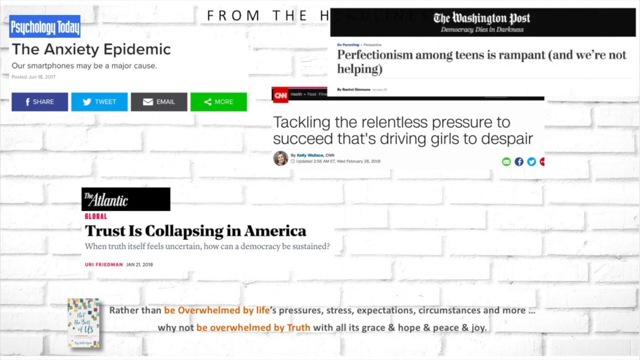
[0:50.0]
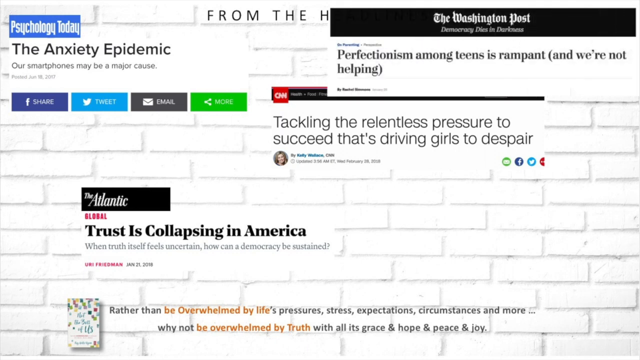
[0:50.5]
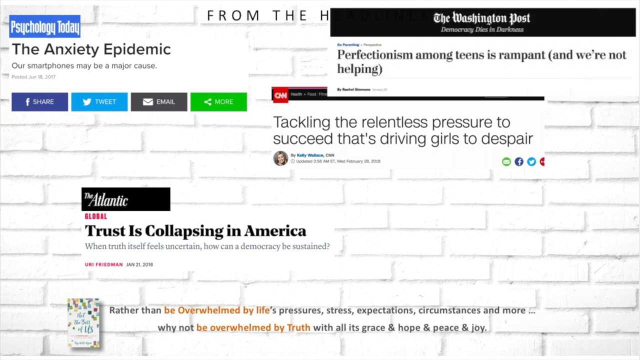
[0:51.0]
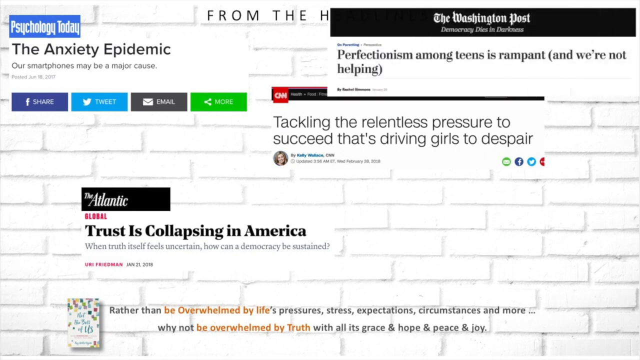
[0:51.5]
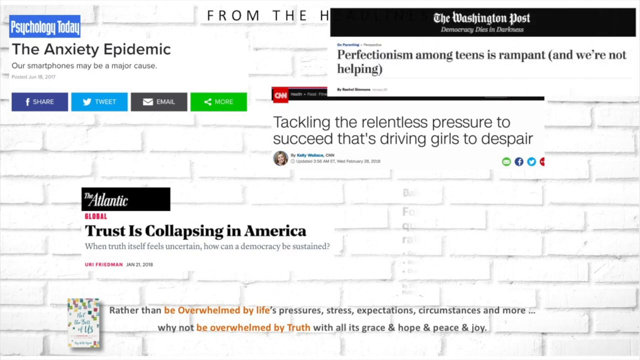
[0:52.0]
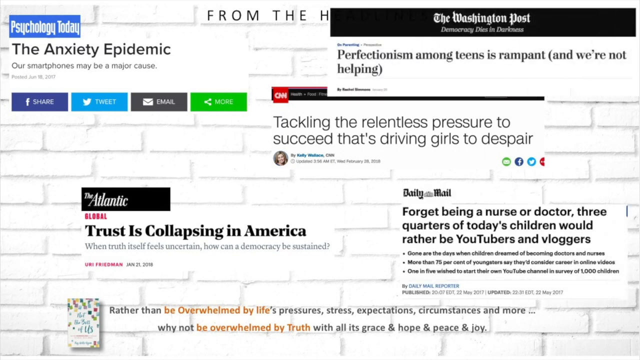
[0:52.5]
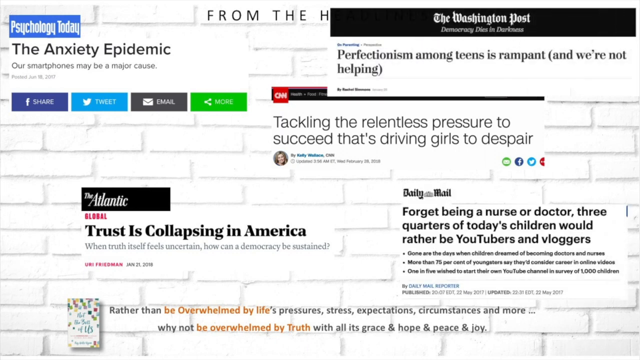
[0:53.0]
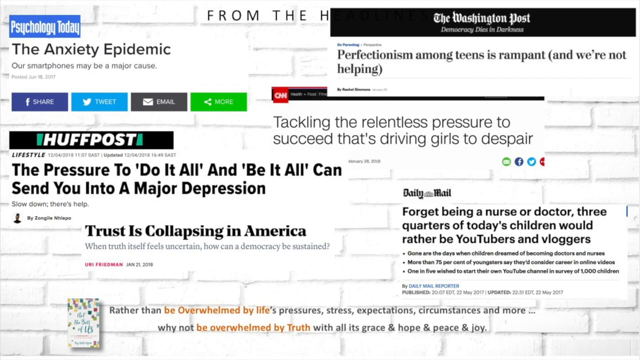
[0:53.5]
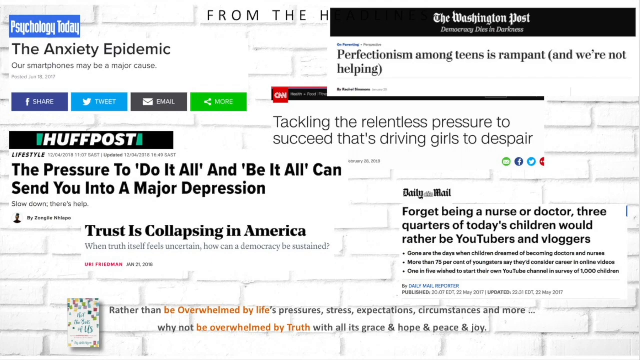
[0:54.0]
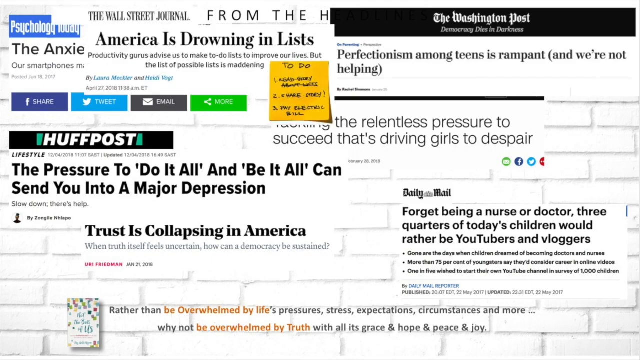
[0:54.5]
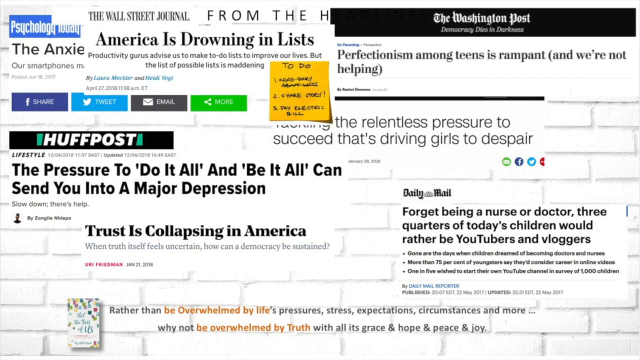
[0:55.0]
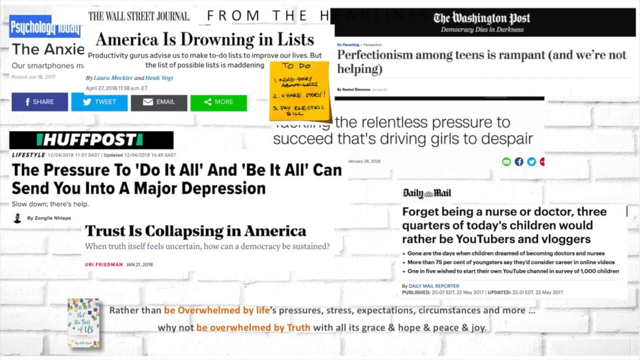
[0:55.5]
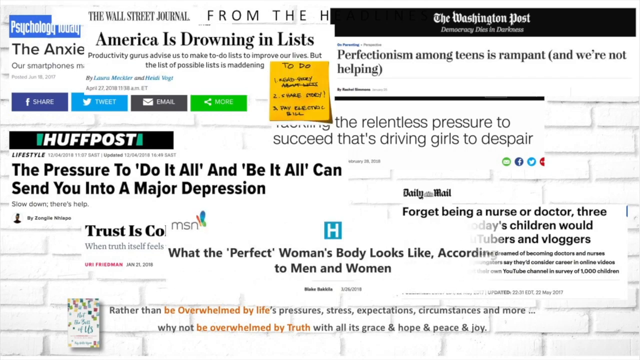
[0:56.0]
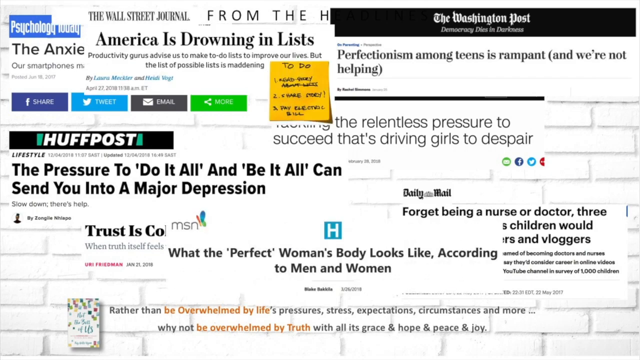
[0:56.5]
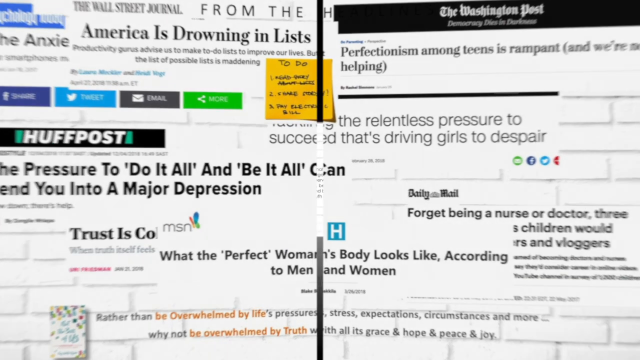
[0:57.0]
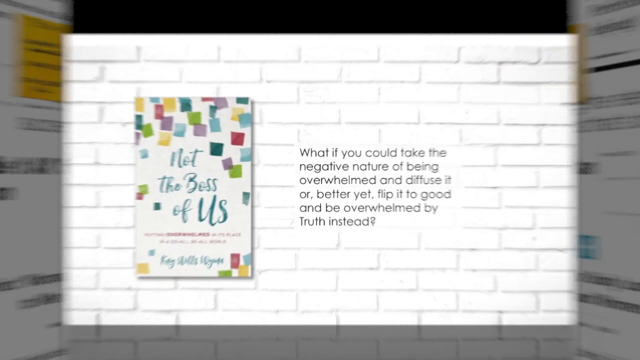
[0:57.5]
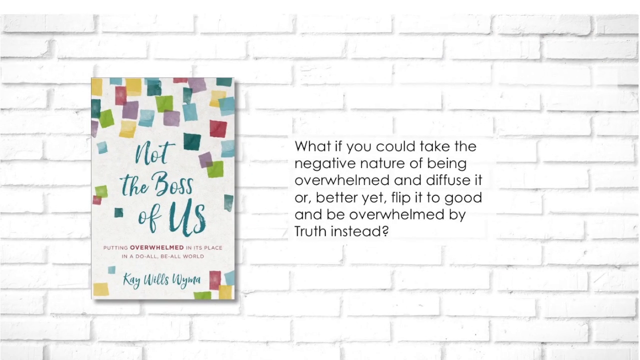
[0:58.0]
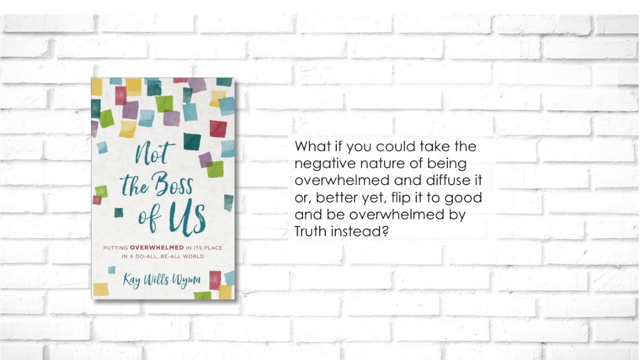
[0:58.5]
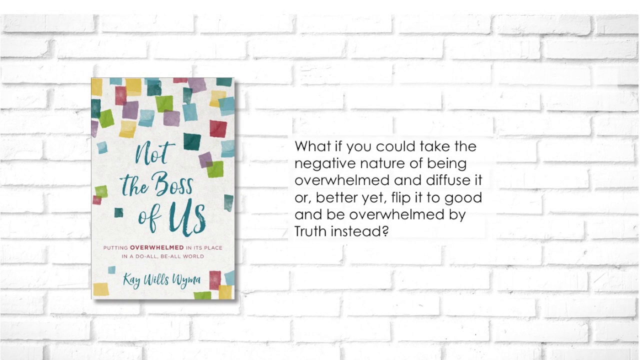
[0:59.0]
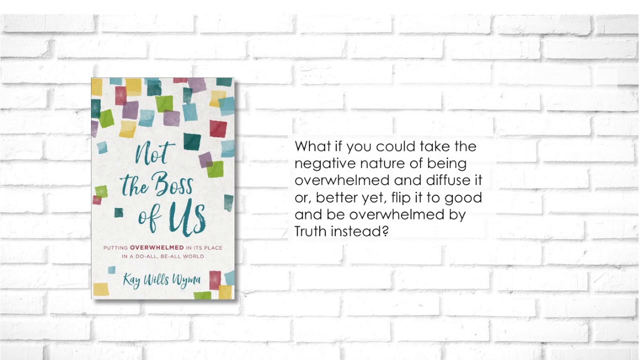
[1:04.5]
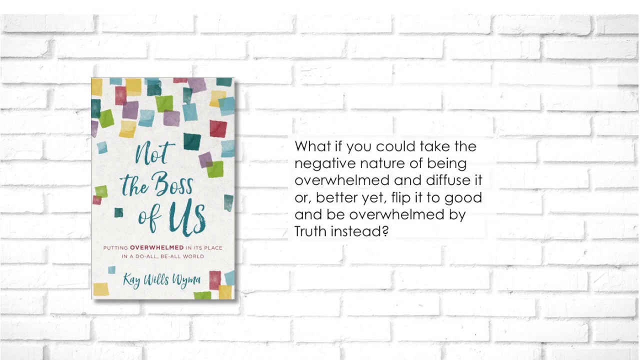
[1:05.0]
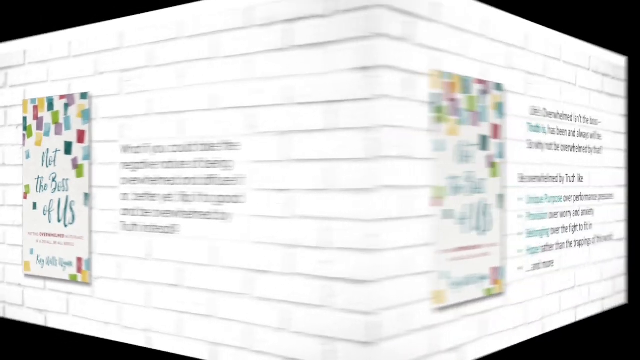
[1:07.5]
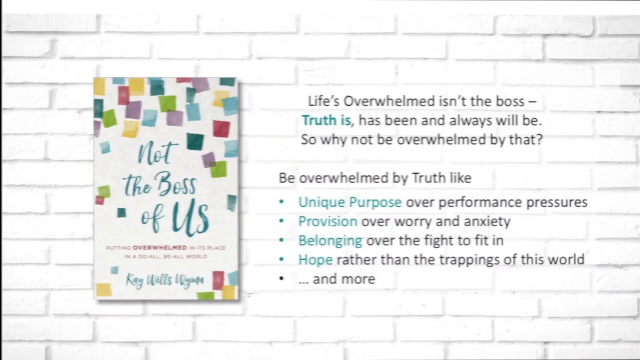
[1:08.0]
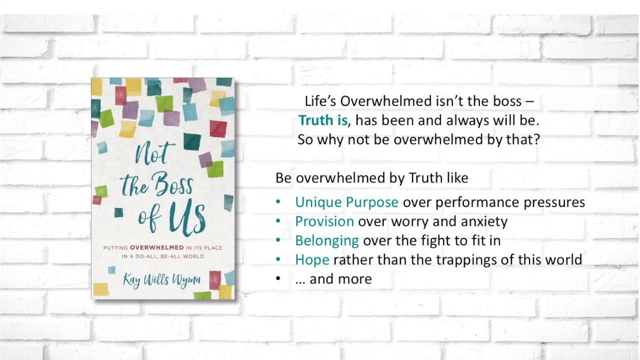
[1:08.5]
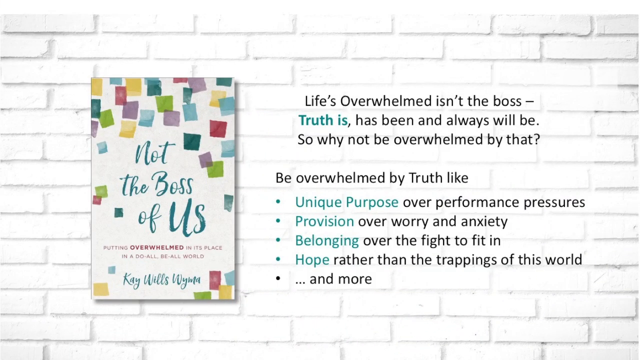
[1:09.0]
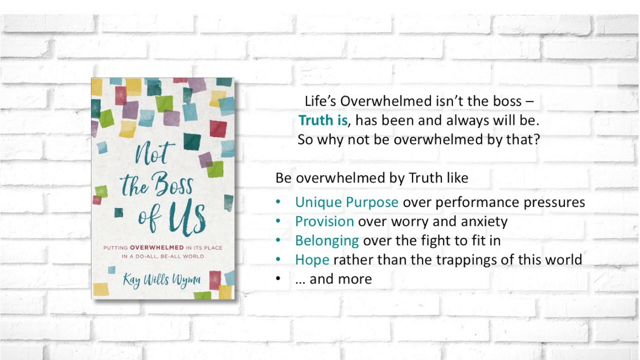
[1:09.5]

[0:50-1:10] More headlines appear, from major news outlets such as the Washington Post and The Wall Street Journal. The articles are about the pressure to be perfect, the stress of trying to do it all, and society's unrealistic standards for the ideal body. Suddenly a yellow sticky note with a long to-do list pops up, adding to the feeling of being buried in tasks and expectations. Then everything on the screen disappears and the cover of the book "Not the Boss of Us" shows up again. A question appears next to the book, asking viewers to think about how they can turn the heavy feeling of being overwhelmed into something more positive. The video offers a new idea: instead of being overwhelmed by stress, anxiety and society's demands, why not be overwhelmed by truth, encouraging uplifting thoughts such as knowing we have a unique purpose and do not need to meet every expectation.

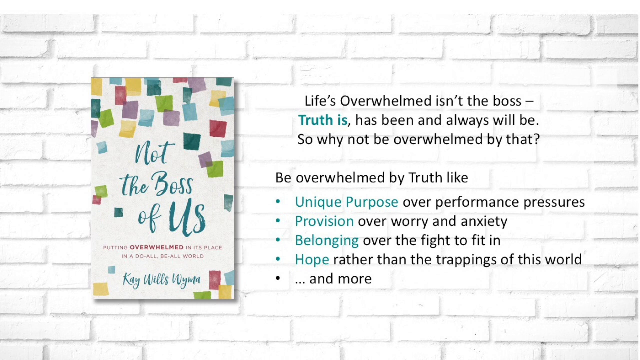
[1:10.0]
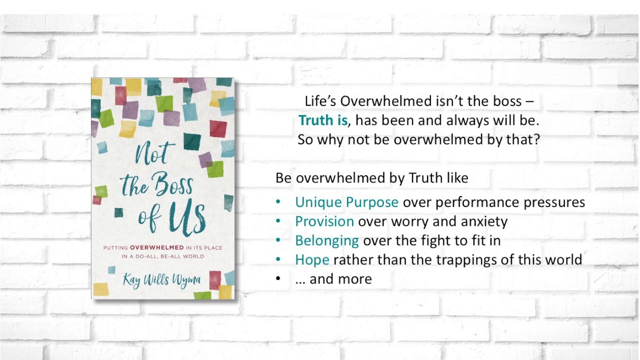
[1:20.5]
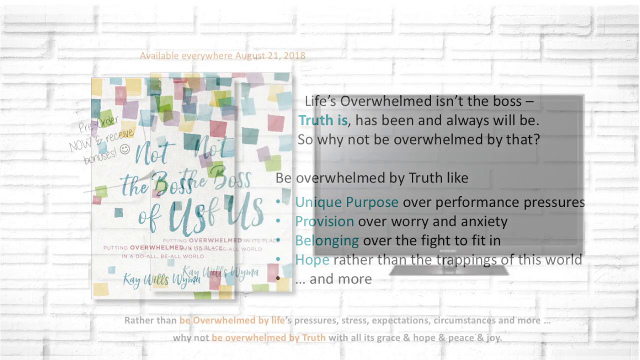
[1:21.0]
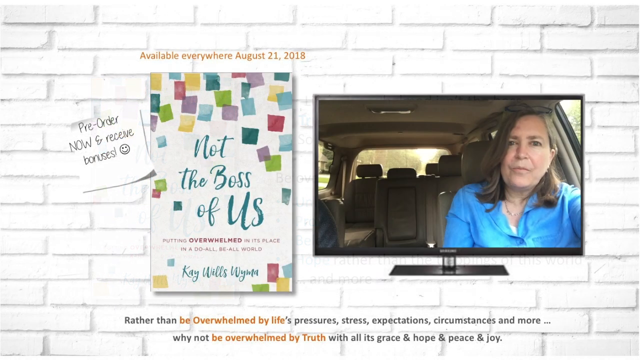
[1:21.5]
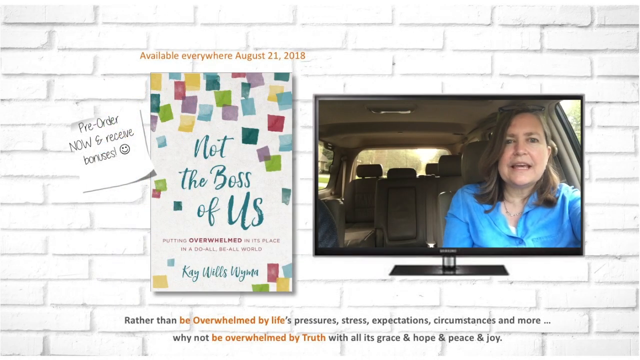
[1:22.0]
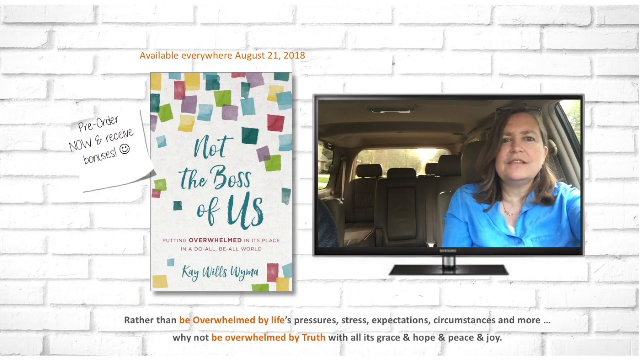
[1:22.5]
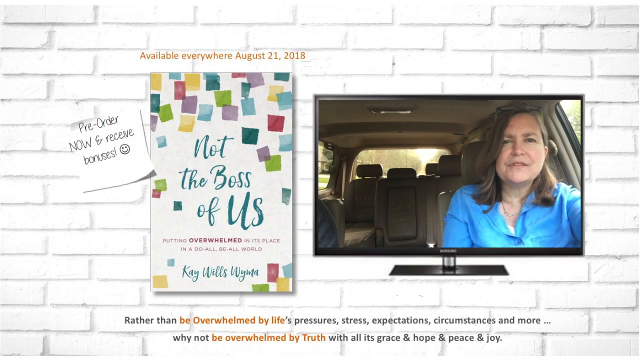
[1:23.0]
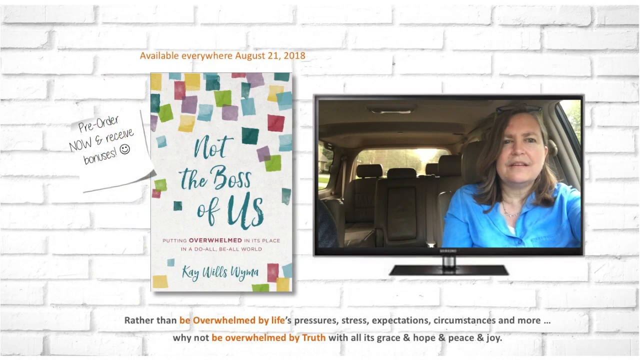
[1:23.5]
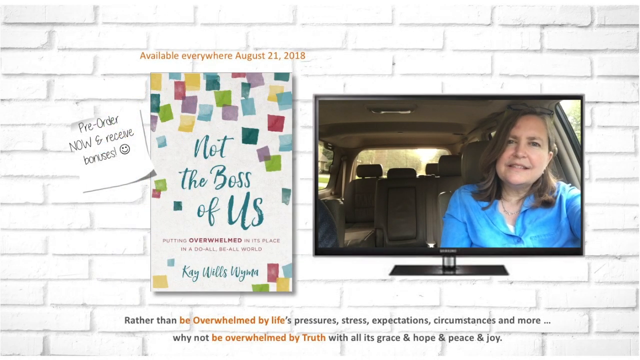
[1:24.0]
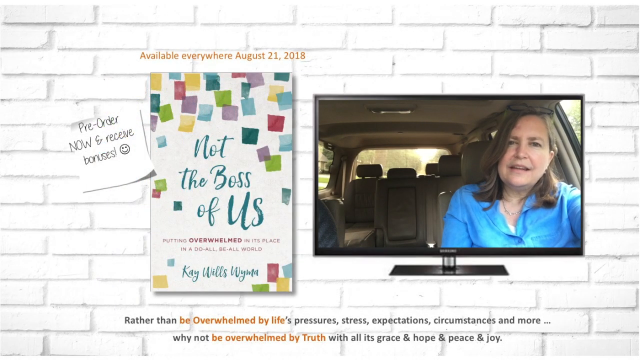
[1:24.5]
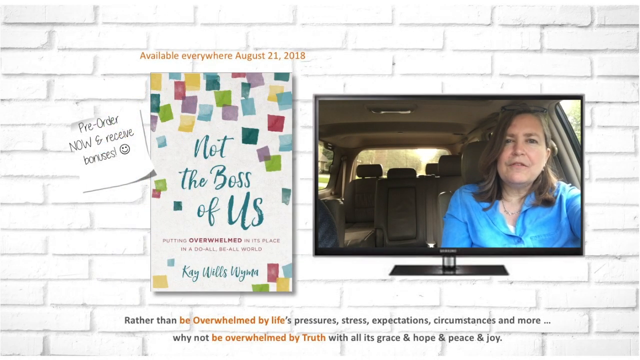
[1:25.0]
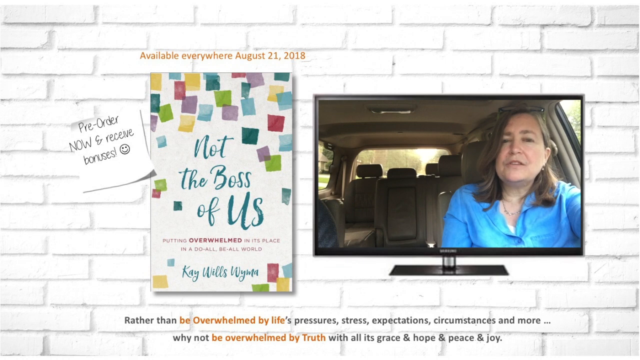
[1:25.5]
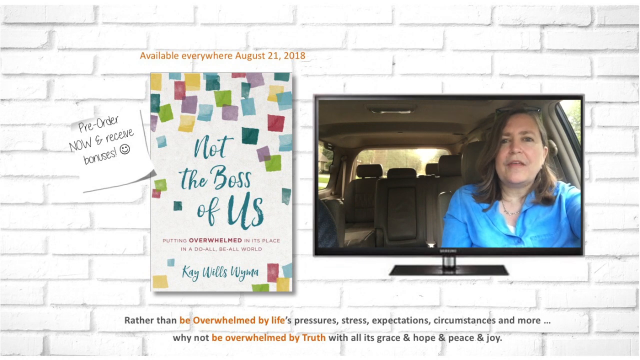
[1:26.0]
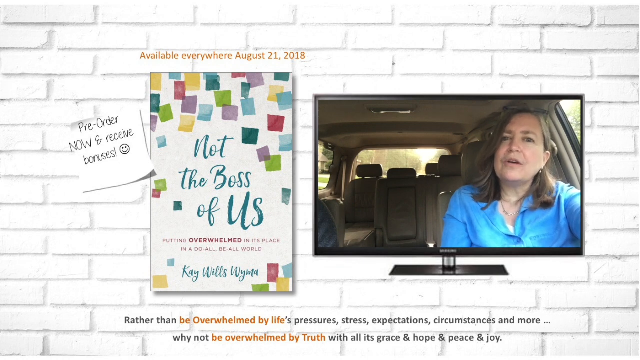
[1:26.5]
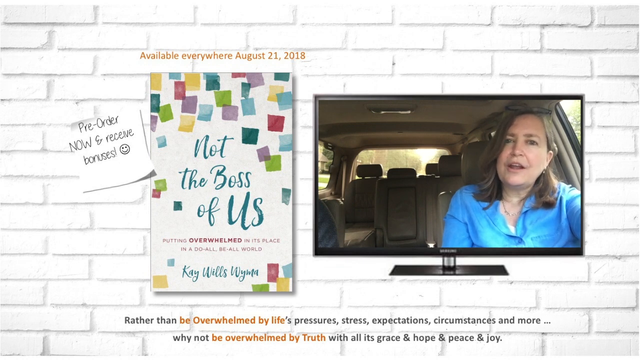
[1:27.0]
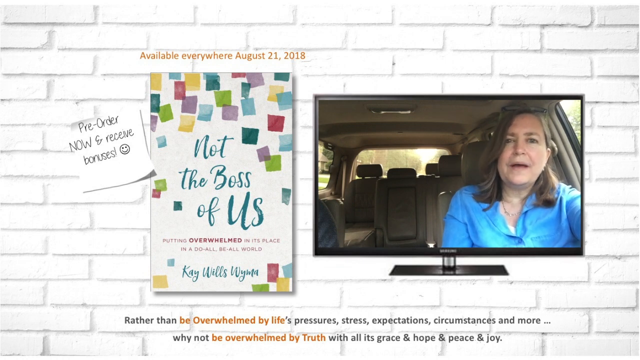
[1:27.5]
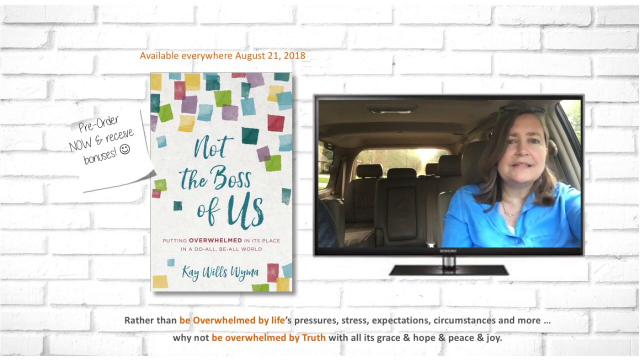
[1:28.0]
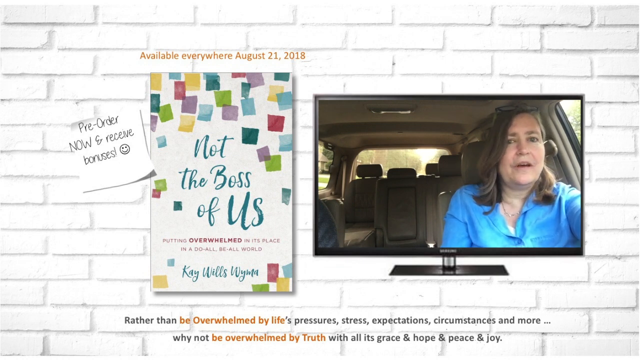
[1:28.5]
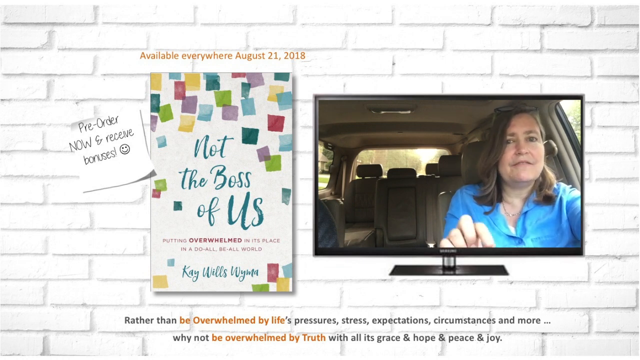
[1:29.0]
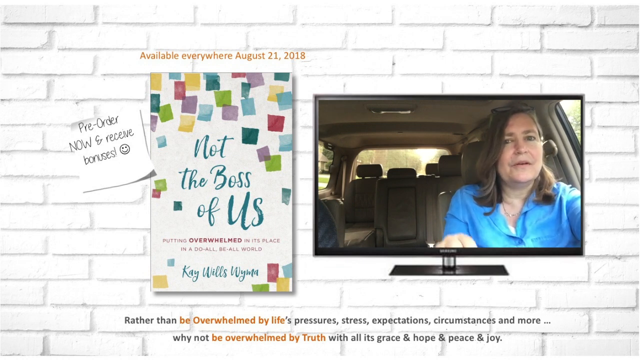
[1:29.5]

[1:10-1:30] More headlines from news outlets such as the Washington Post, the Wall Street Journal and other media sources are shown, about the pressure to be perfect, the stress of trying to do it all at the same time, and society's unrealistic standards for the ideal body. A yellow sticky note with a long to-do list pops up. Then everything on the screen disappears and the cover of the book "Not the Boss of Us" appears again, with a question next to it asking viewers to think about how they can turn the feeling of being overwhelmed into something more positive. The video offers the idea of being overwhelmed by truth instead of by stress, encouraging uplifting thoughts such as knowing you have a unique purpose in life and do not need to meet every expectation.